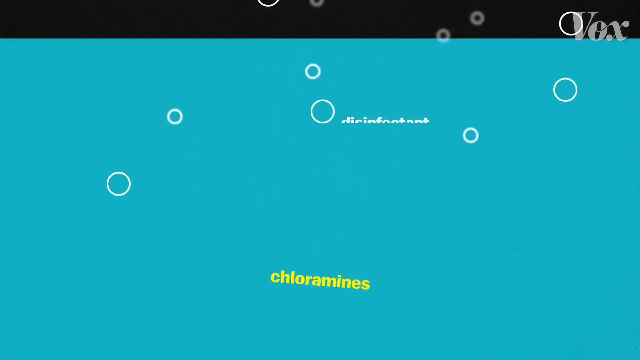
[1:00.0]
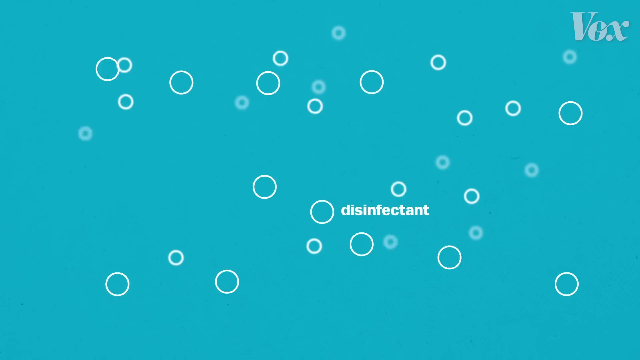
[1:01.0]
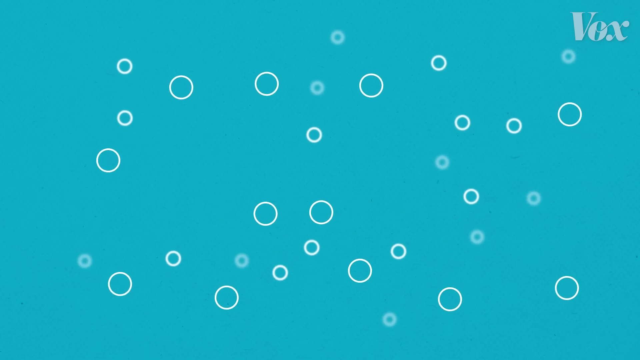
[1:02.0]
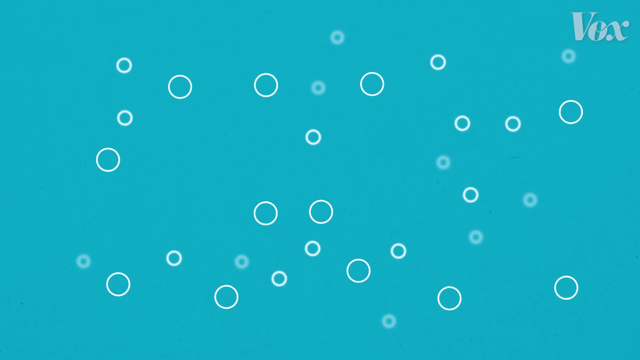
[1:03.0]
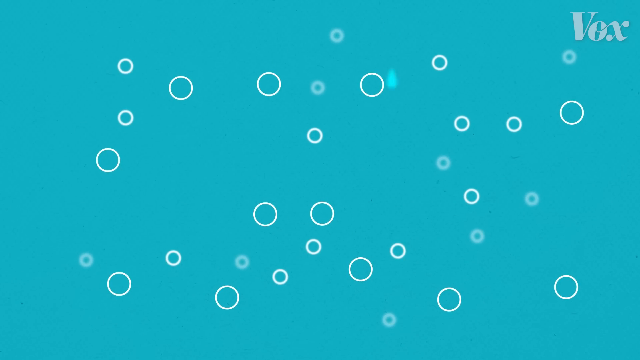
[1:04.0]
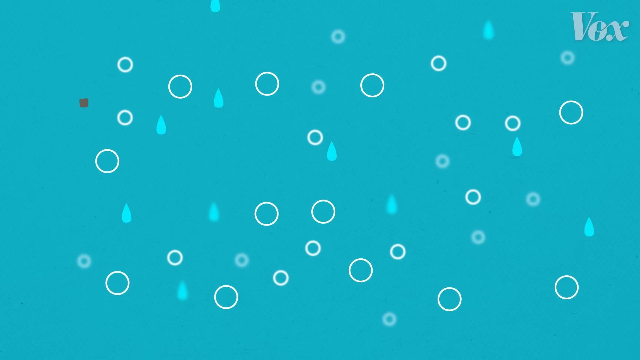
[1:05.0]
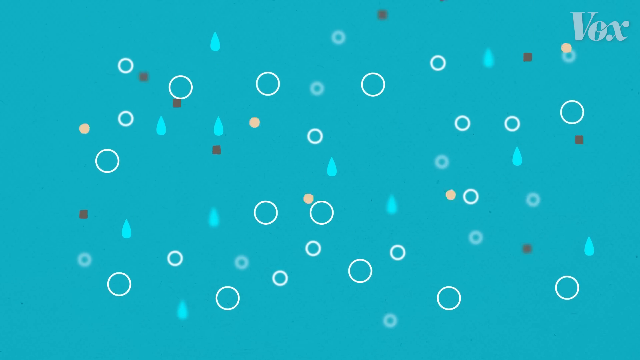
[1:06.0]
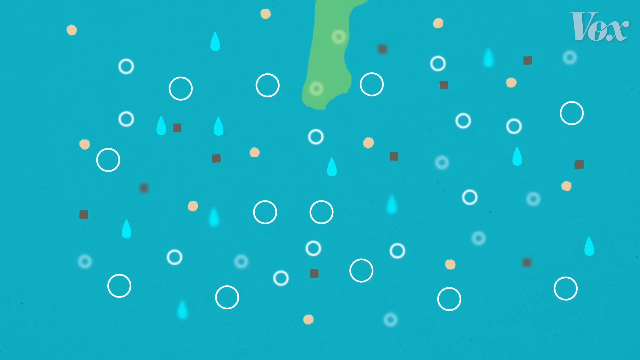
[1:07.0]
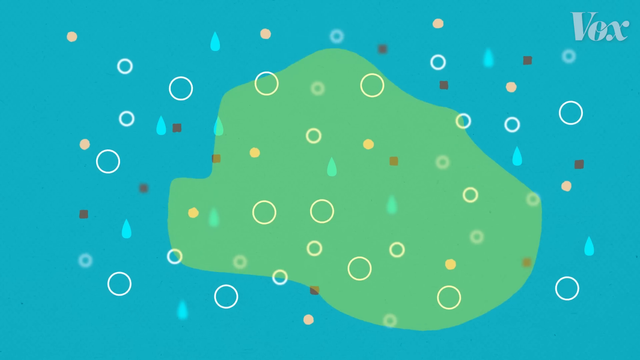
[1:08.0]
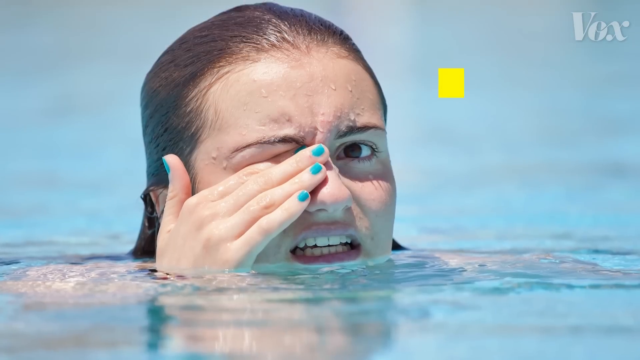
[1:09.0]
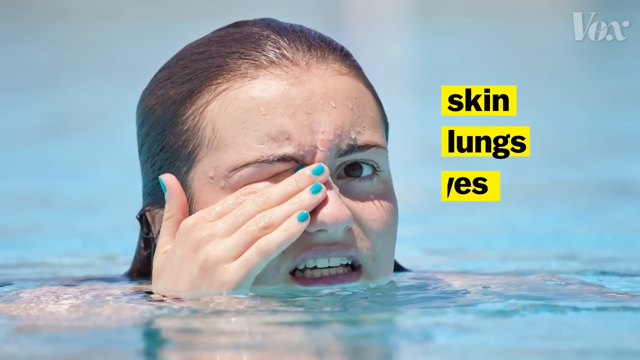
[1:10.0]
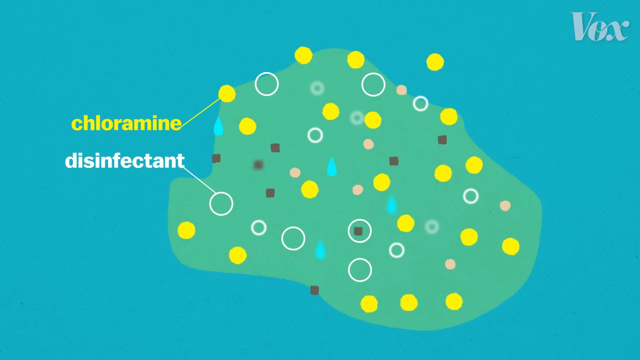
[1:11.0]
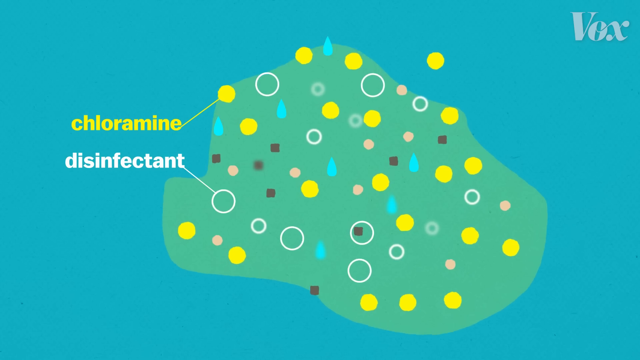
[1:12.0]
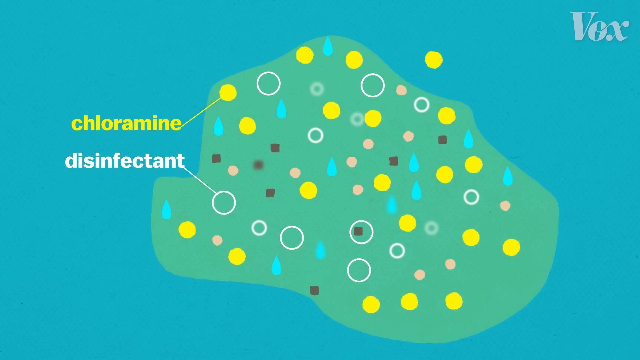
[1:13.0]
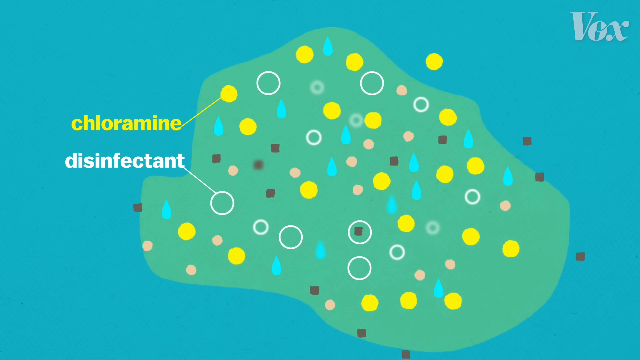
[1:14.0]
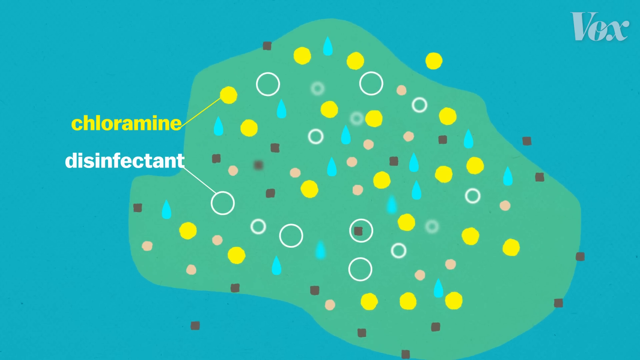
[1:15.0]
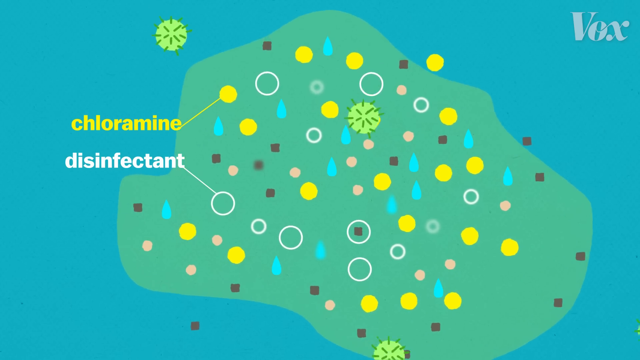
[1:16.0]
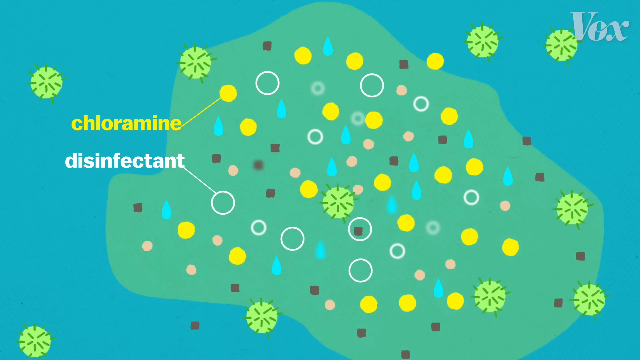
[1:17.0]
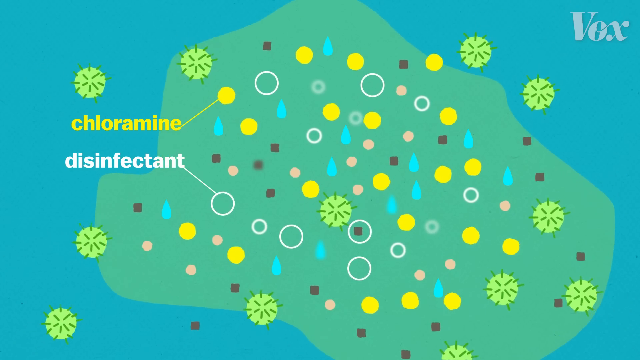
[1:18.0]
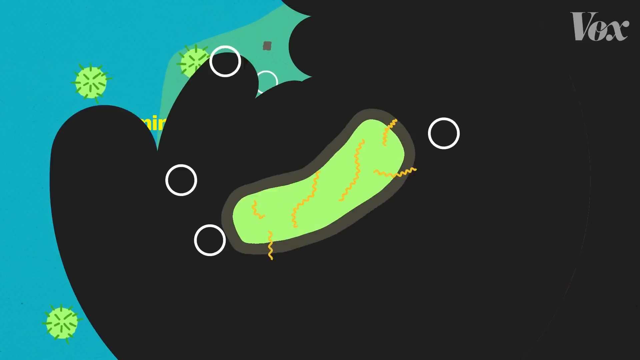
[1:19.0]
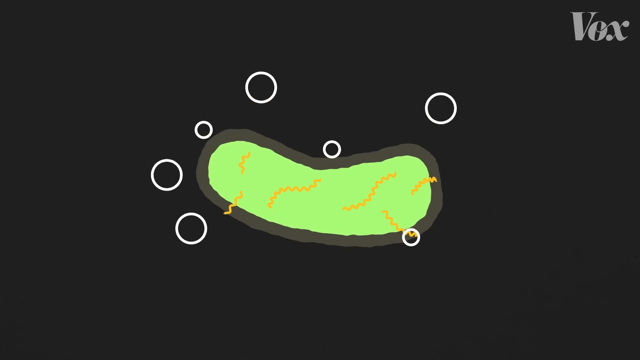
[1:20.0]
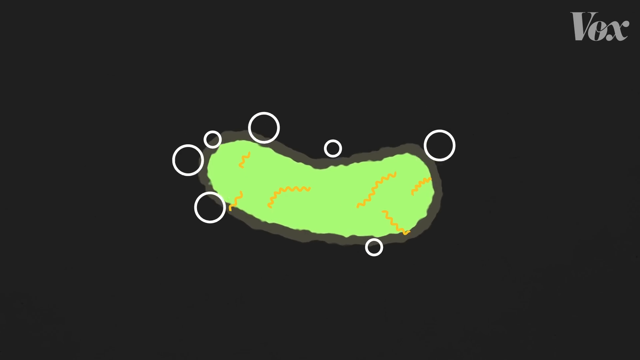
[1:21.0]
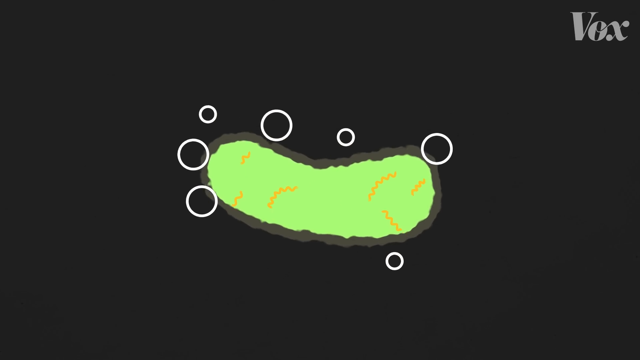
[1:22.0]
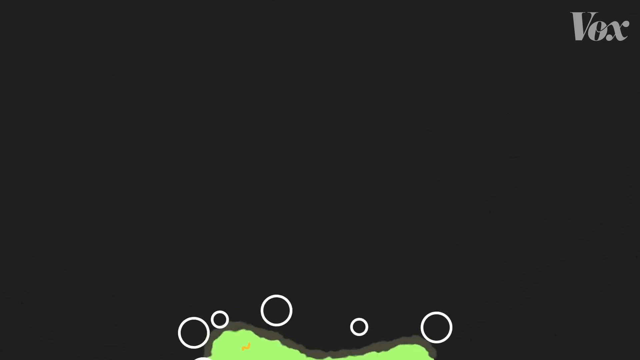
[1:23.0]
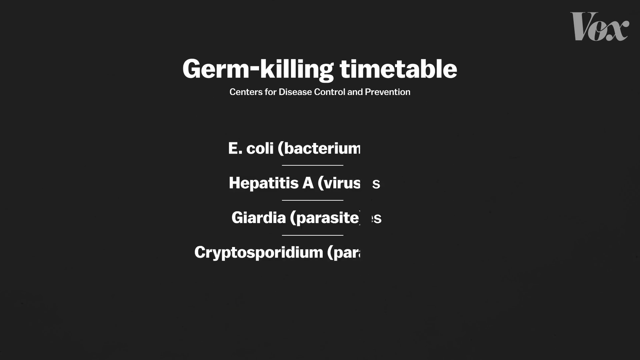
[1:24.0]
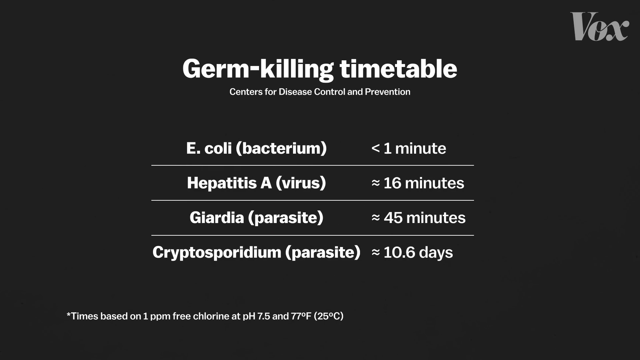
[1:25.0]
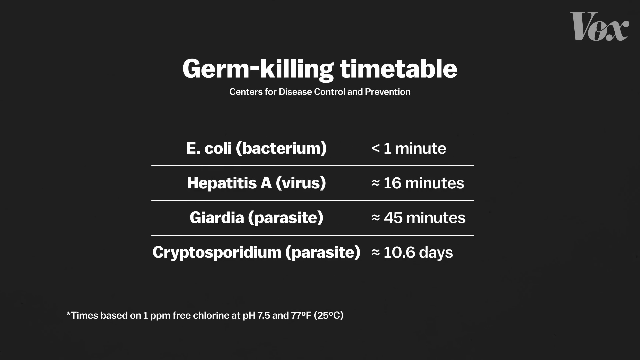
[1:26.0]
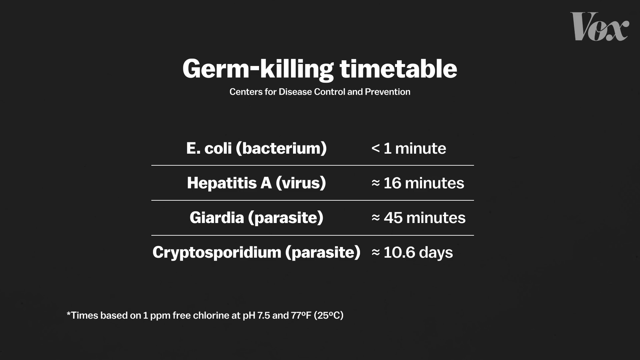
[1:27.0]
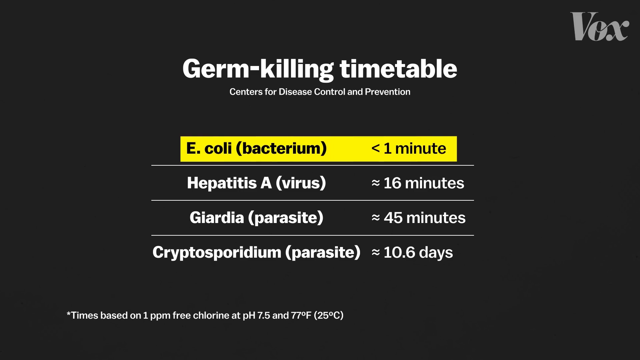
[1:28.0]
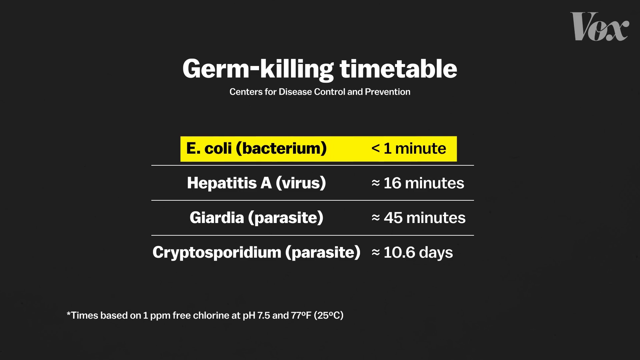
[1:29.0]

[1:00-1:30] The blue screen shows "chloramines" in yellow block lettering on the blue background, with what appear to be water drops coming down. Then "disinfectant" appears in white block lettering on the blue background. The water drops look like they are kind of moving; more drops appear, then what look to be yellow drops, kind of black squares, and something like a green puddle. A woman in the pool rubs her right eye with her right hand, and to her right the words "skin, lungs, eyes" pop up. Back on the blue screen are the green blob, the blue drops, the yellow circle and the black square; "chloramine" points to the yellow circle and "disinfectant" points to the white circle. Other drops appear: white, then pink, then a black square, then more, followed by a light green shape with a larger light green circle and darker green specks coming out. On a black screen, what looks kind of like an amoeba, much bigger, is light green with orange squiggly lines; the drops seem to be trying to penetrate it, but nothing happens. Then "germ killing timetable" and "Centers for Disease Control and Prevention" appear, listing different germ killing timetables for E. coli, hepatitis, giardia and Cryptosporidium.